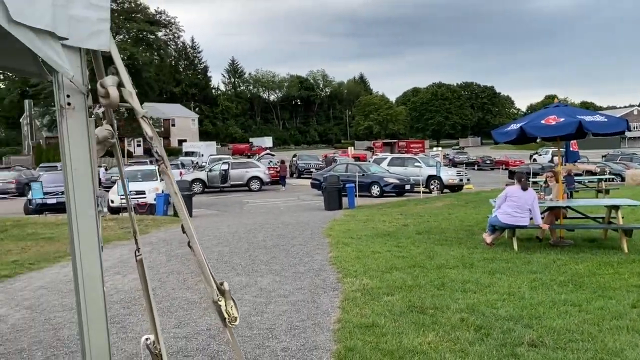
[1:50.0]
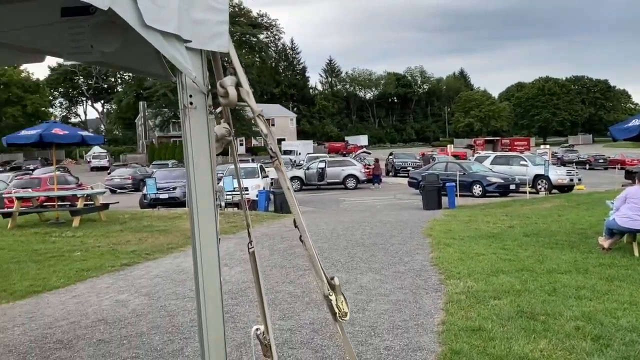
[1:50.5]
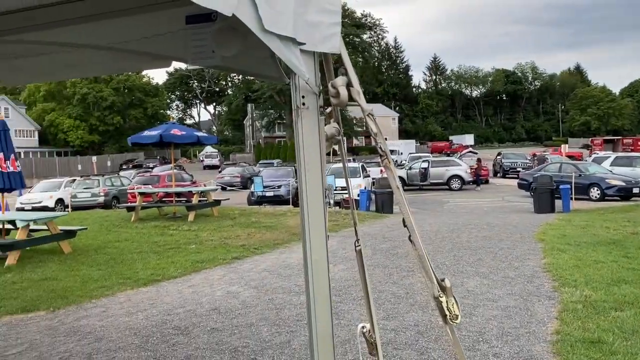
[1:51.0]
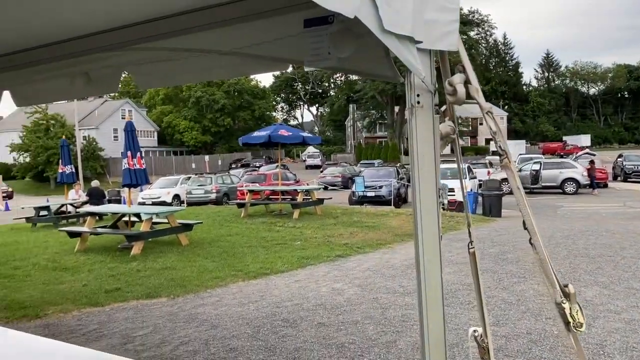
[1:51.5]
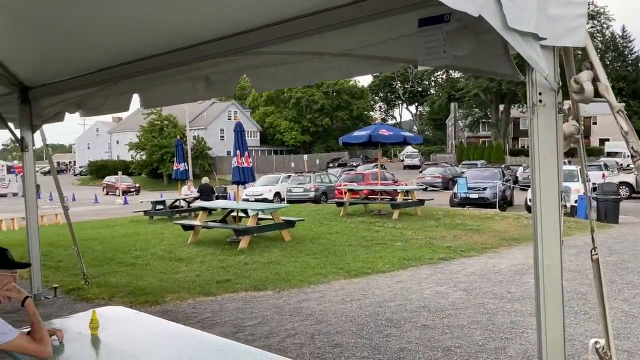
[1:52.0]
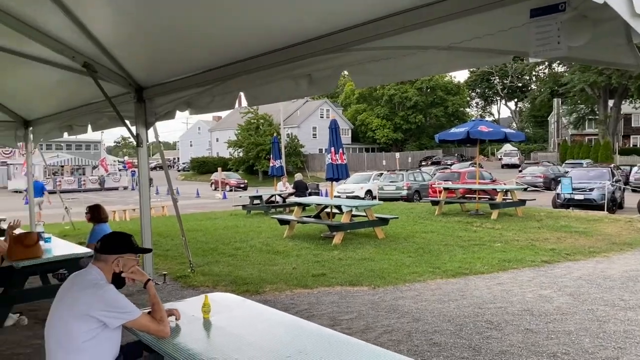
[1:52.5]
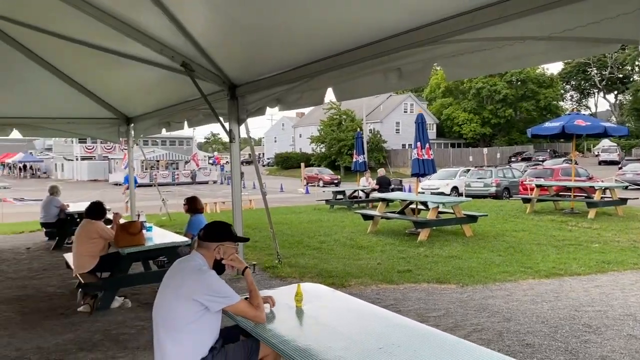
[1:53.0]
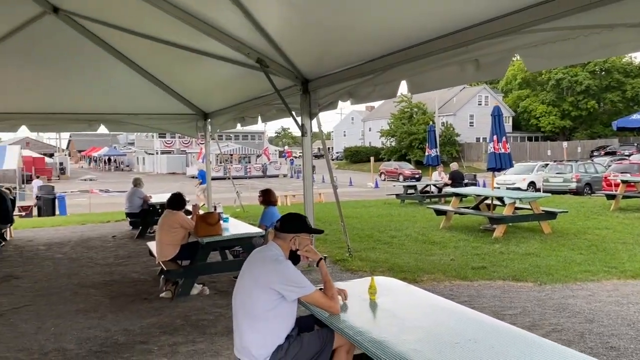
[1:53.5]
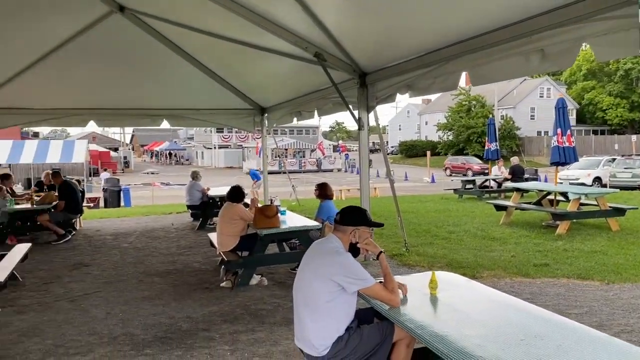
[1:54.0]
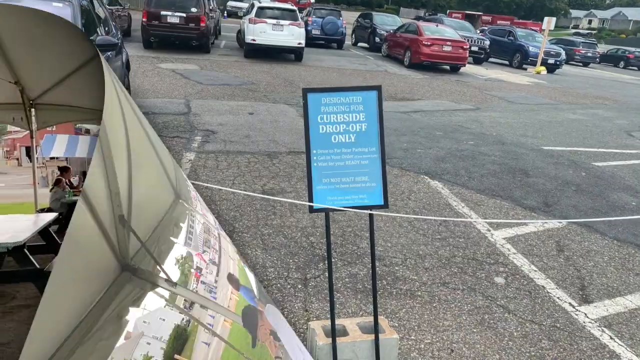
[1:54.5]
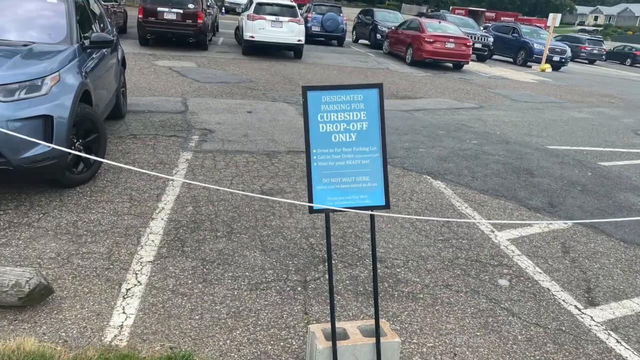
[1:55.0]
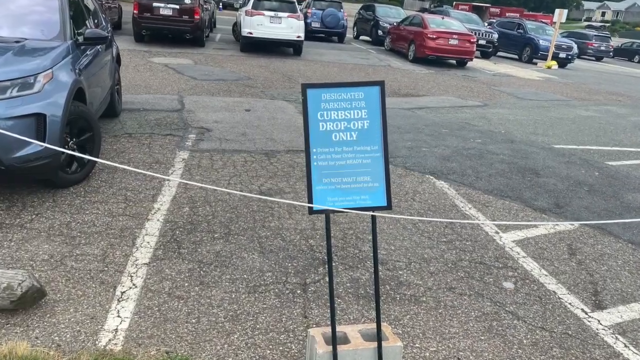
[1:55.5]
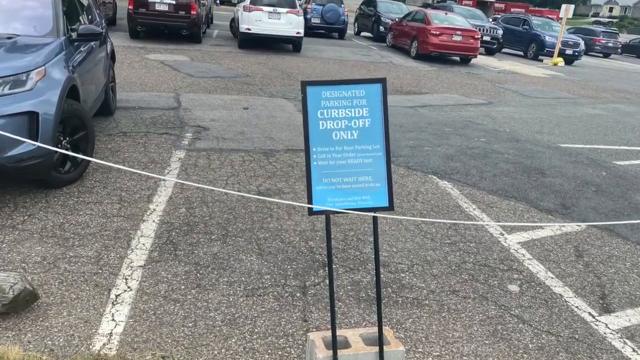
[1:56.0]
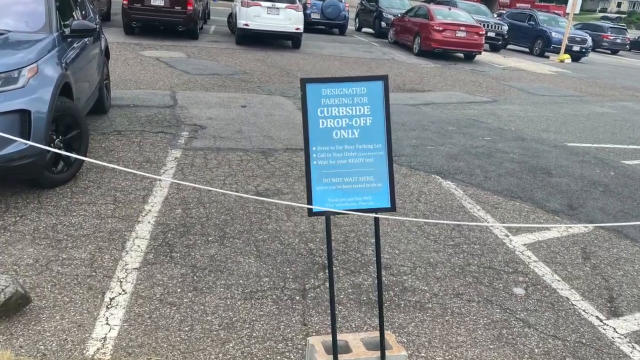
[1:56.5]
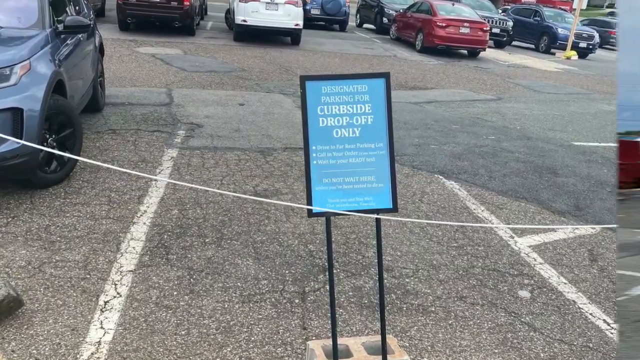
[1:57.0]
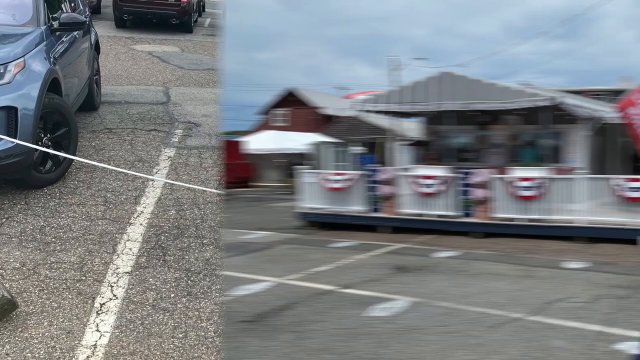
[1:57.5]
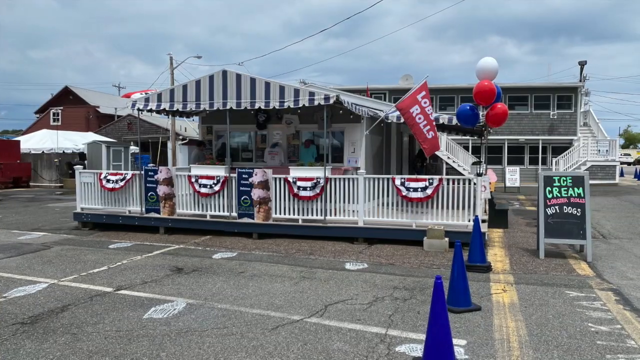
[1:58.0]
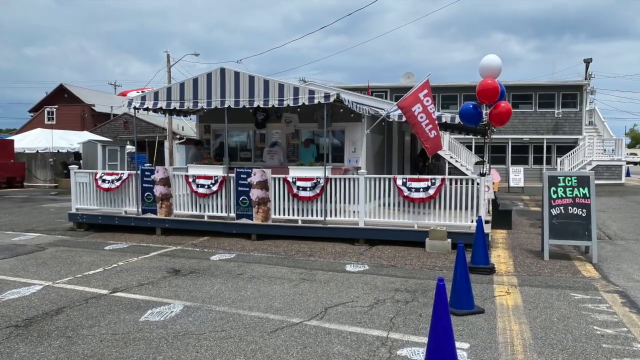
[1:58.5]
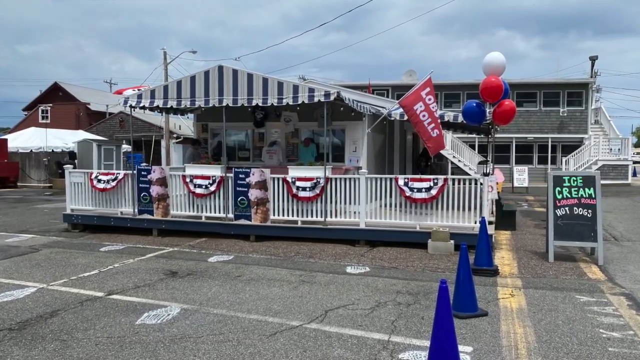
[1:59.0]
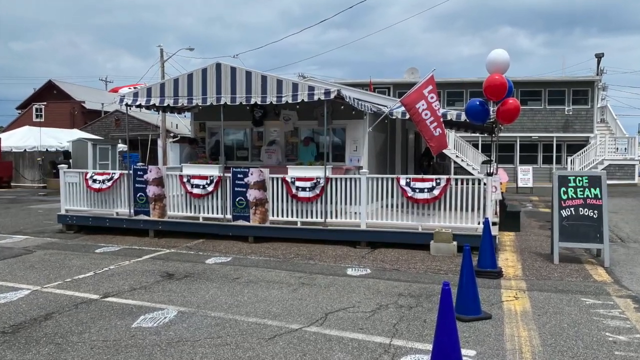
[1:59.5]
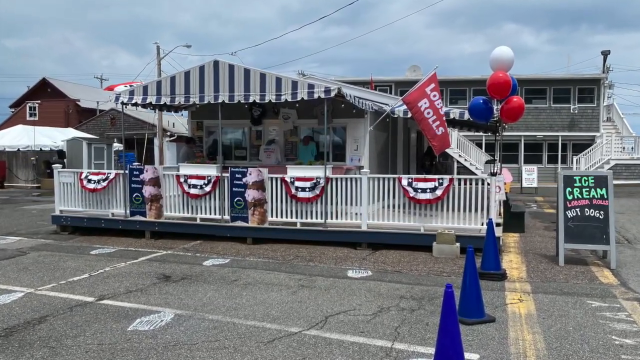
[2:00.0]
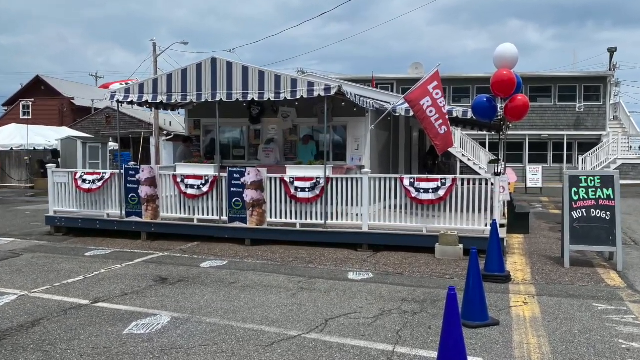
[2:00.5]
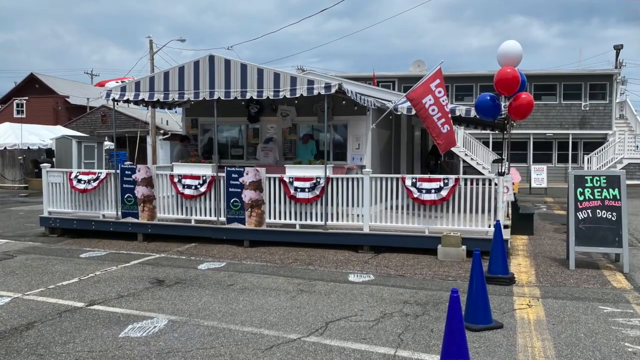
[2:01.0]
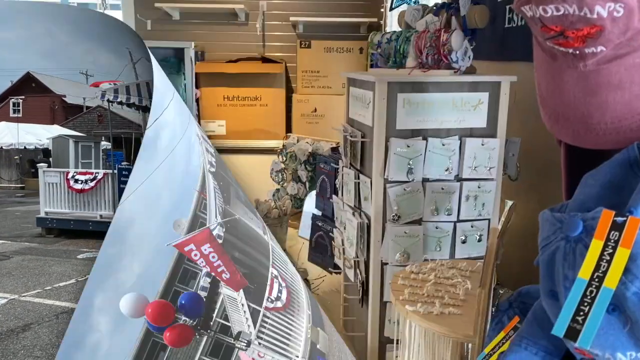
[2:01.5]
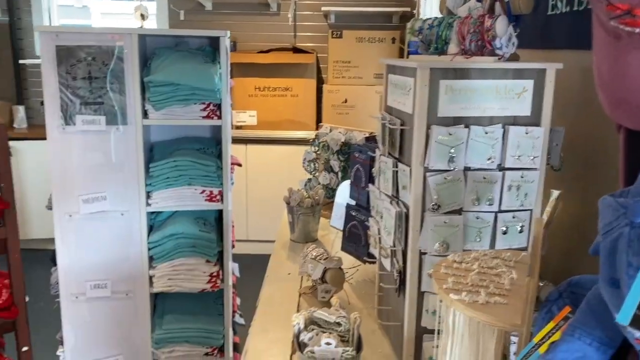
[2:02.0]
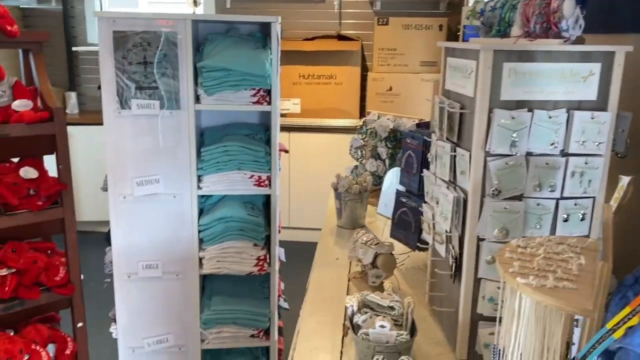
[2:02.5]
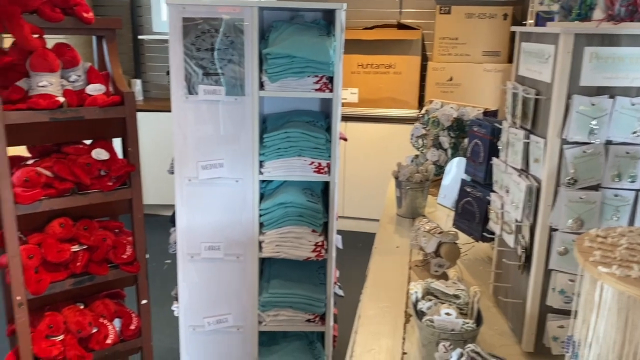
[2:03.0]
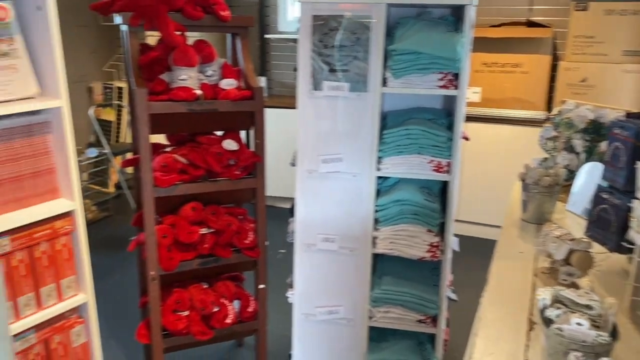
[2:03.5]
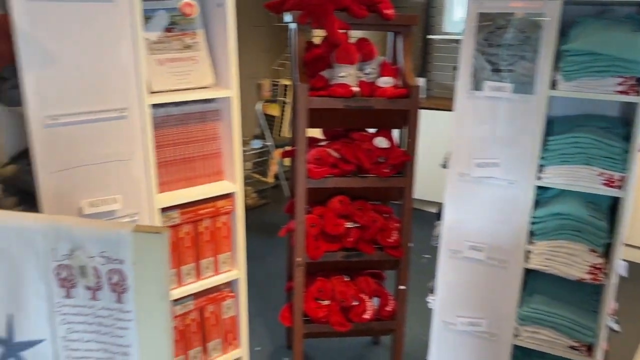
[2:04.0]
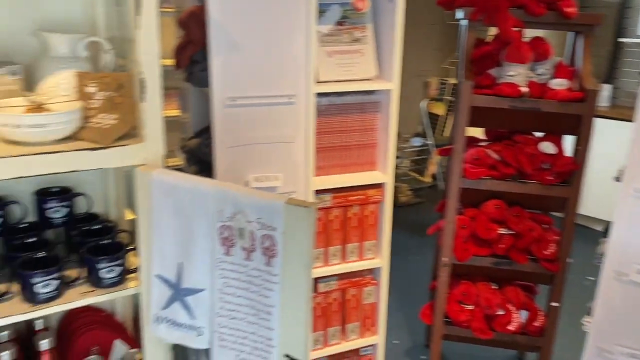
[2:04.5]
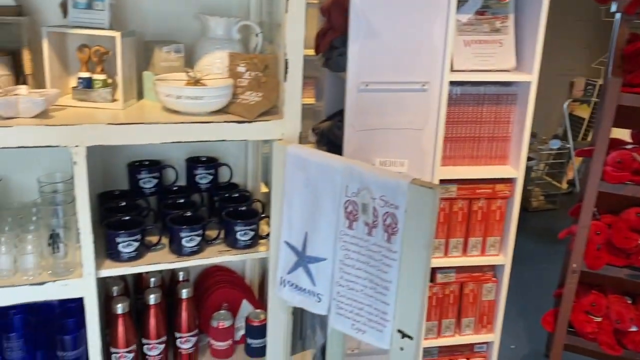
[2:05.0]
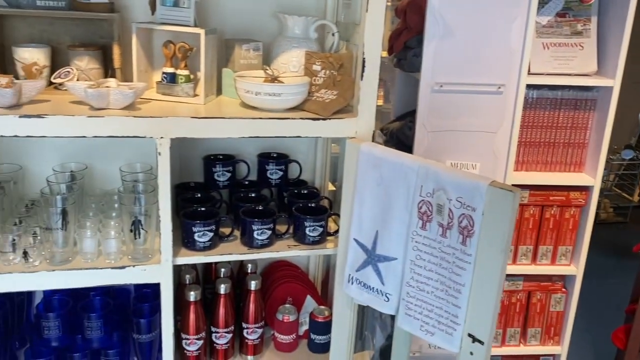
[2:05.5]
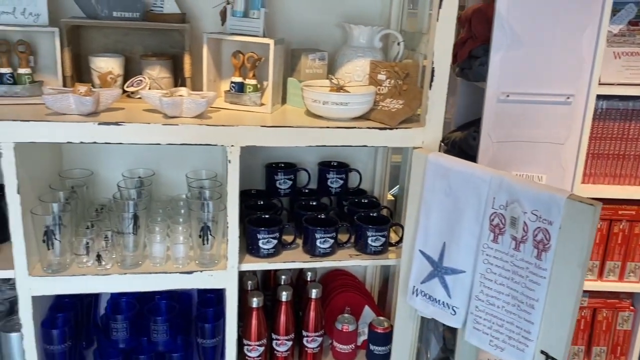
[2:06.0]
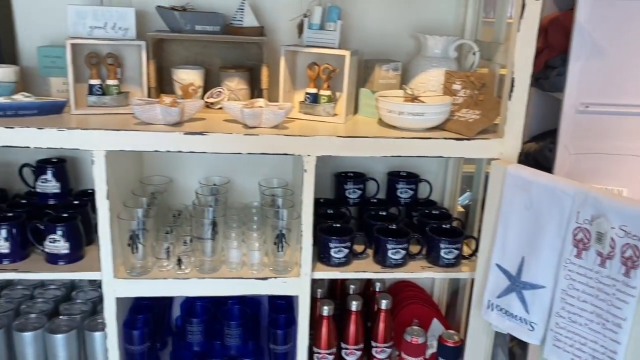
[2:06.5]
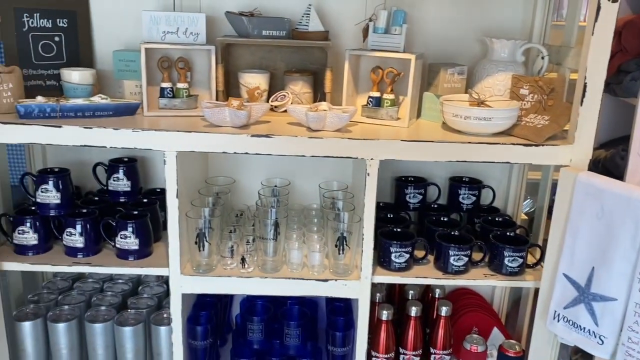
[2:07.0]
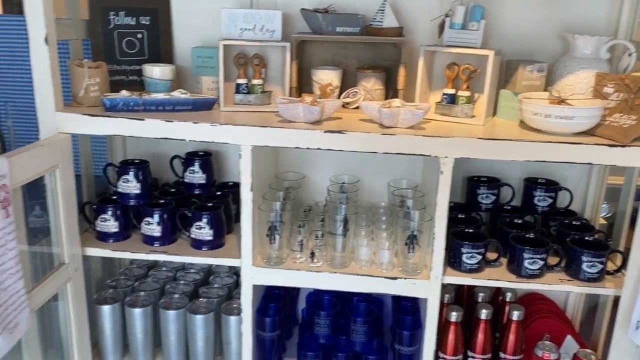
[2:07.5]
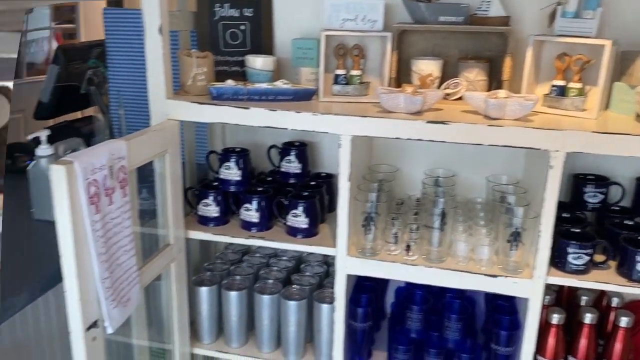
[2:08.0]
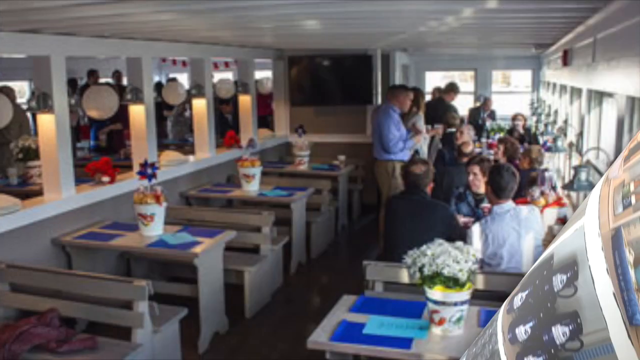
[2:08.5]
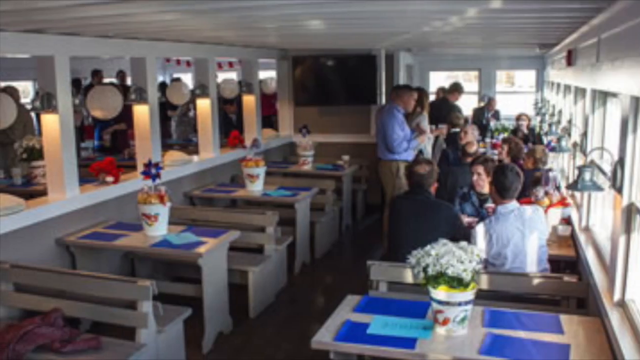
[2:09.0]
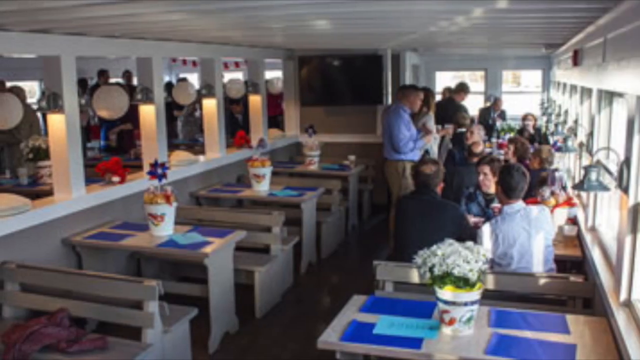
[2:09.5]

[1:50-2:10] A large area has some bigger tables completely underneath some sort of awning or shelter, with buildings in the background at the far end. Next is a close-up of a sign in the car park that says "designated parking for campsite drop-off only", with a white string tied up, apparently to block entry to the parking space. A still of the restaurant follows; it looks decked out for the 4th of July or something similar, with blue, red and white banners and balloons, and blue traffic cones down the right of the screen. A chalkboard sign says "ice cream and hot dogs, lobster rolls", and a flag flying says "lobster rolls" as well. The camera zooms in on the picture, and then the next shot shows the inside of the shop with various glassware and bits and pieces for sale, followed by the inside of the restaurant with its tables.